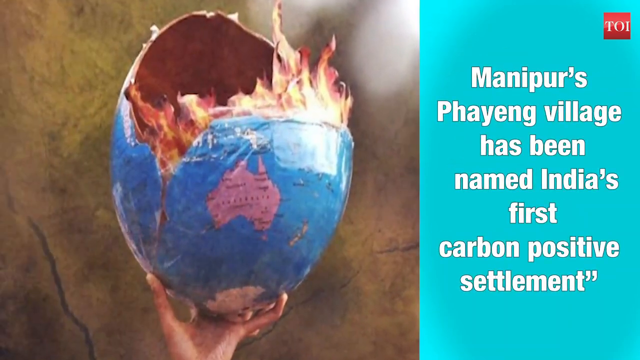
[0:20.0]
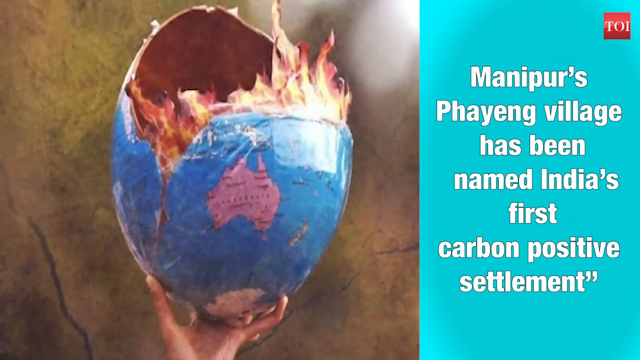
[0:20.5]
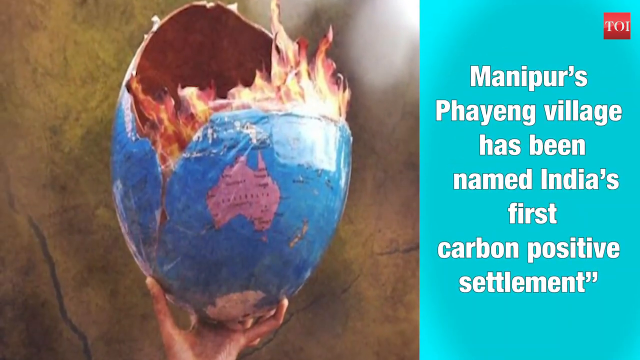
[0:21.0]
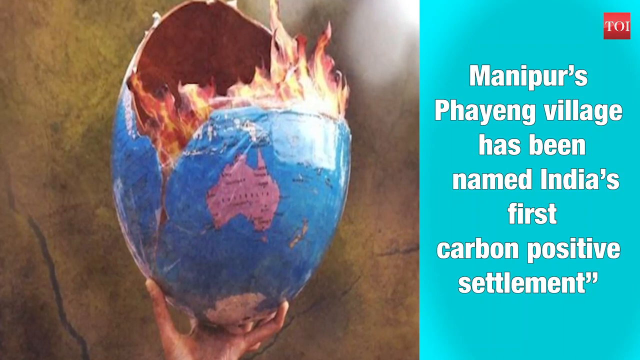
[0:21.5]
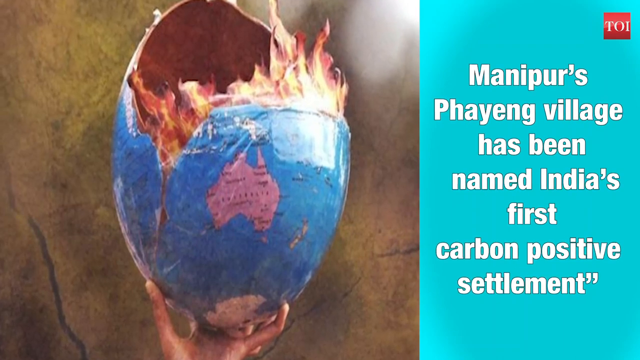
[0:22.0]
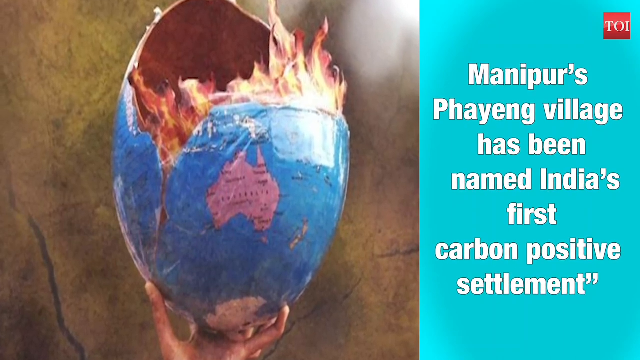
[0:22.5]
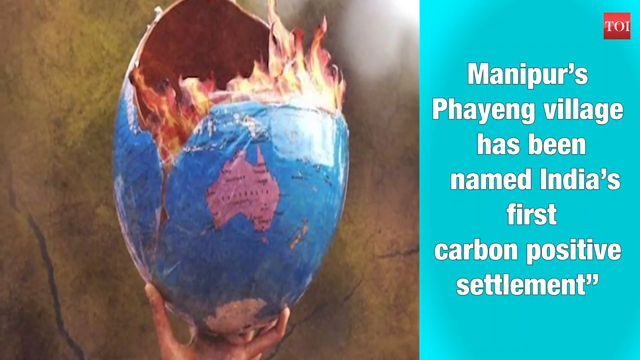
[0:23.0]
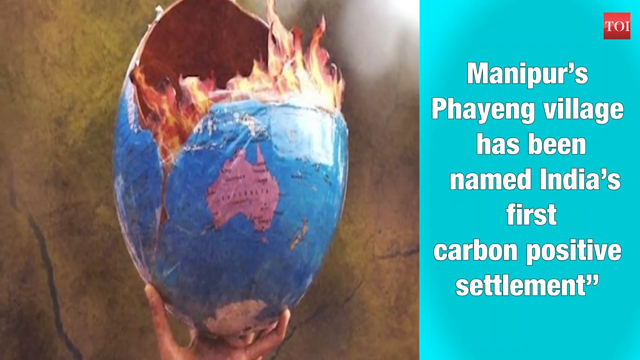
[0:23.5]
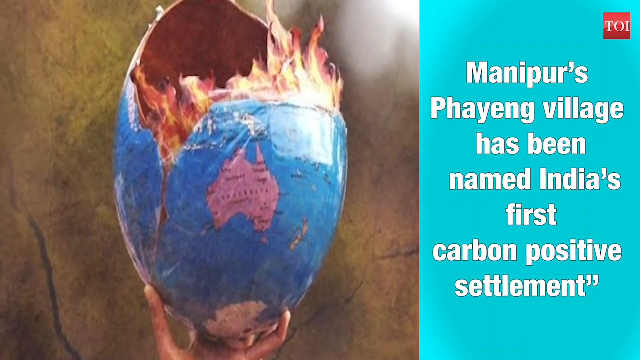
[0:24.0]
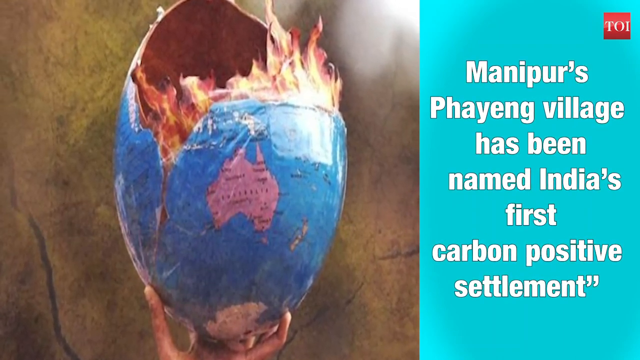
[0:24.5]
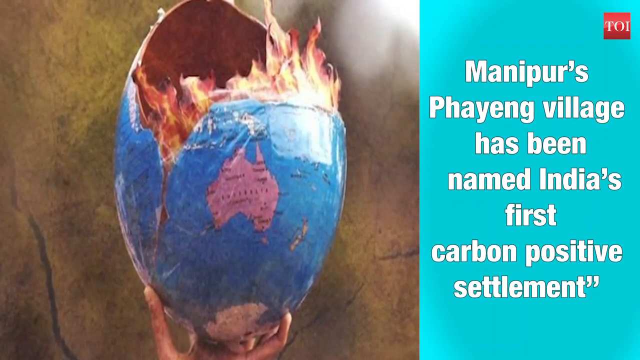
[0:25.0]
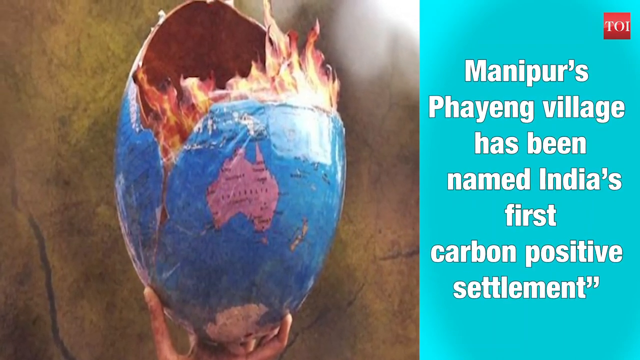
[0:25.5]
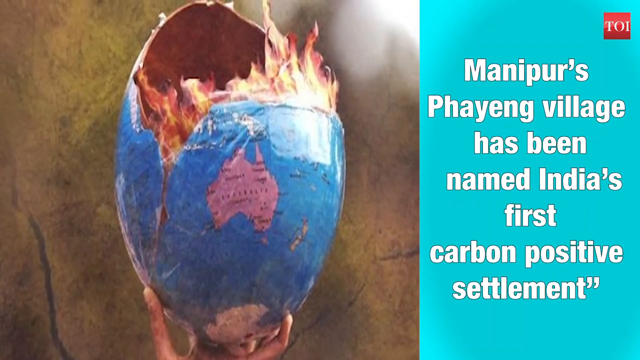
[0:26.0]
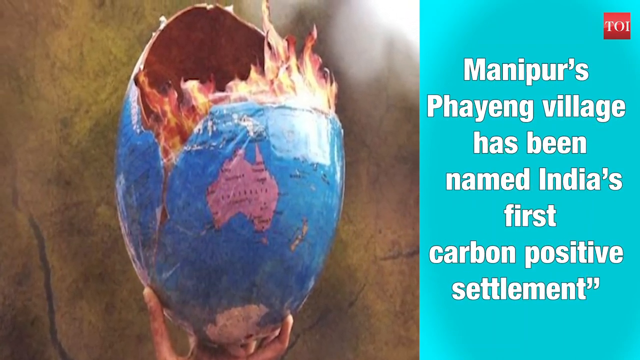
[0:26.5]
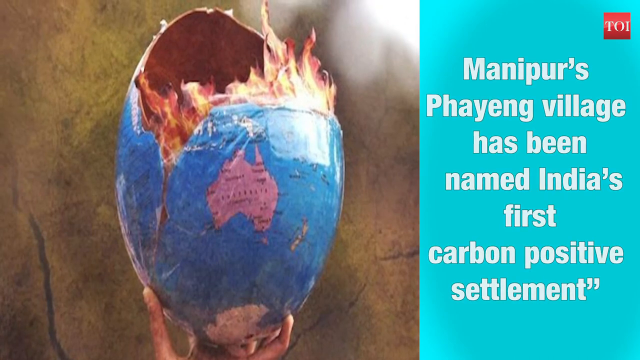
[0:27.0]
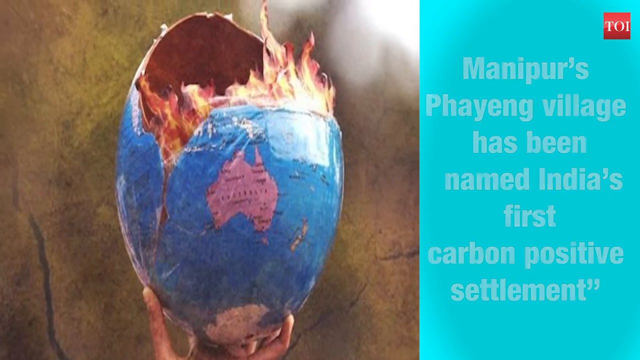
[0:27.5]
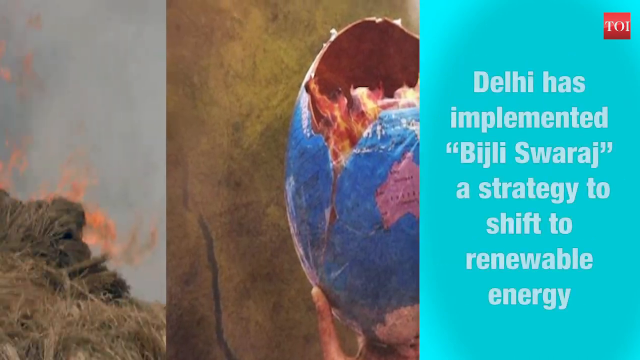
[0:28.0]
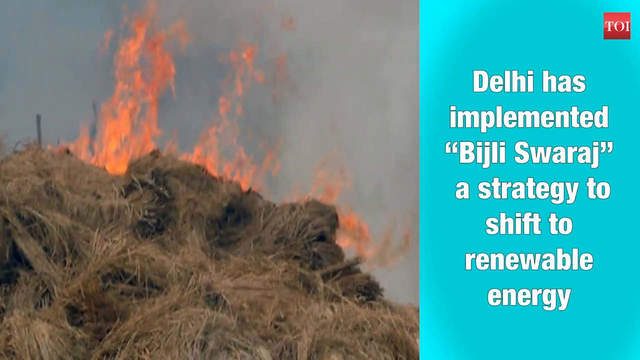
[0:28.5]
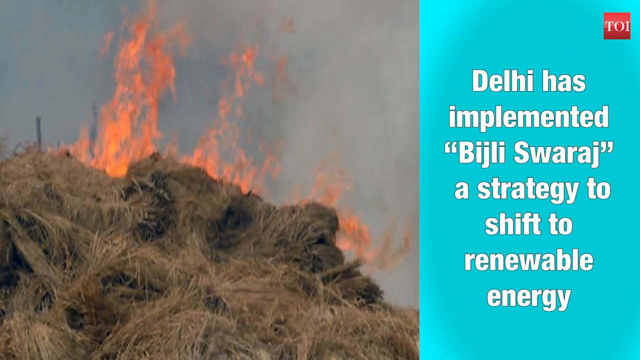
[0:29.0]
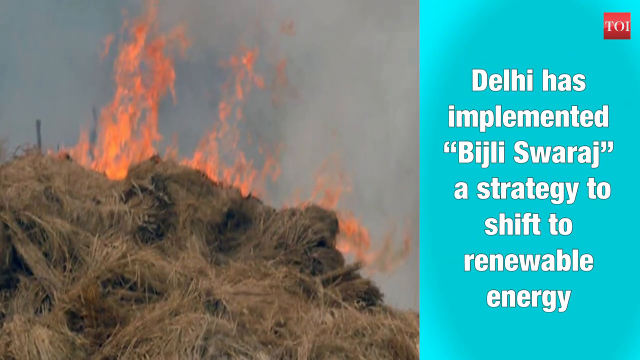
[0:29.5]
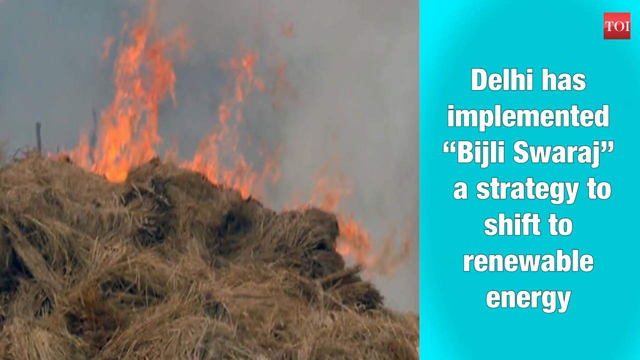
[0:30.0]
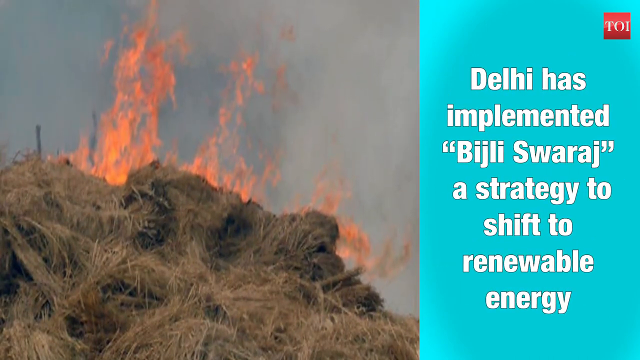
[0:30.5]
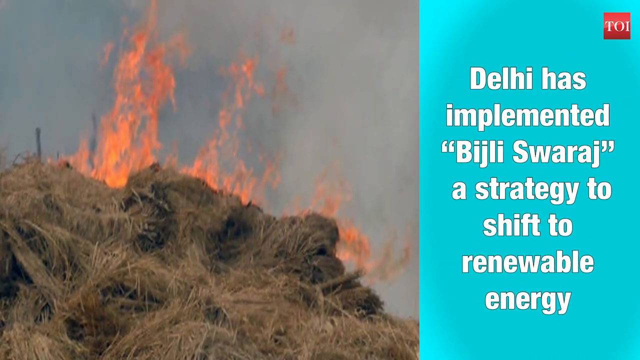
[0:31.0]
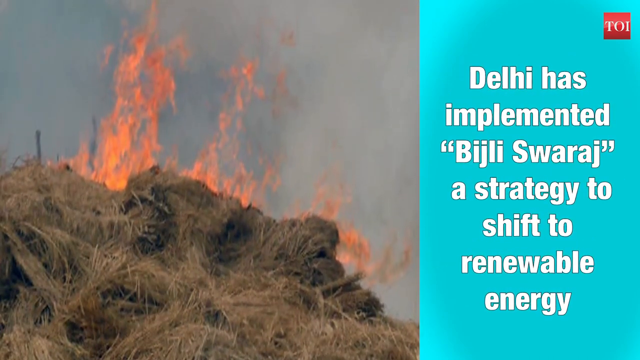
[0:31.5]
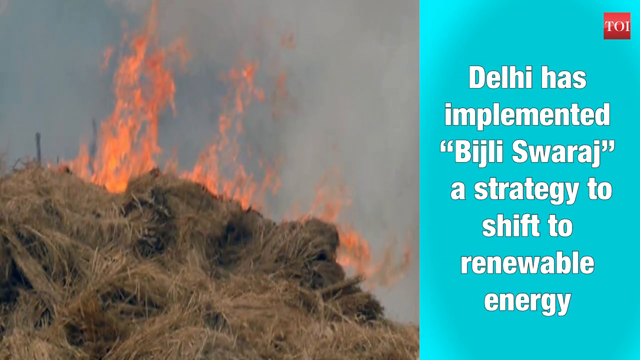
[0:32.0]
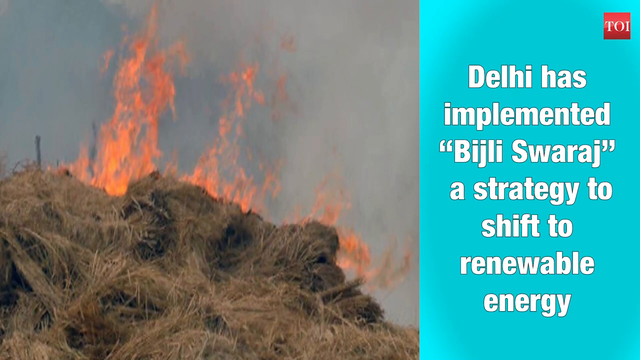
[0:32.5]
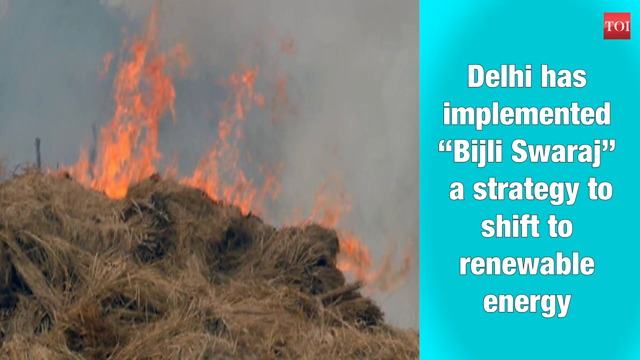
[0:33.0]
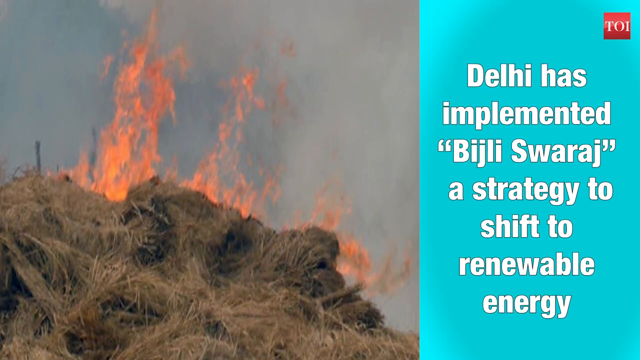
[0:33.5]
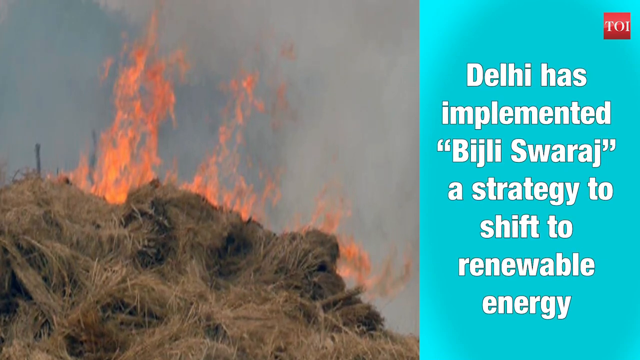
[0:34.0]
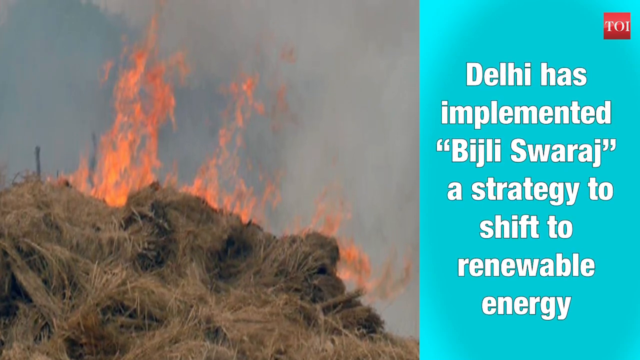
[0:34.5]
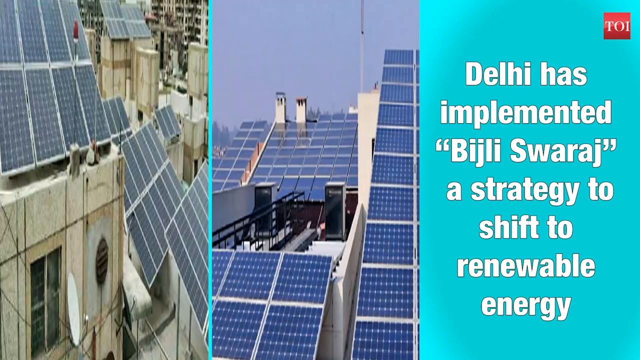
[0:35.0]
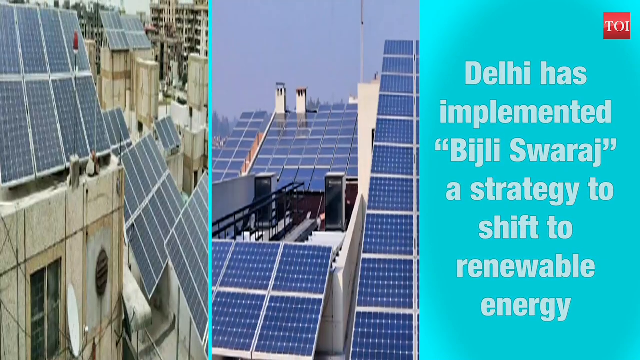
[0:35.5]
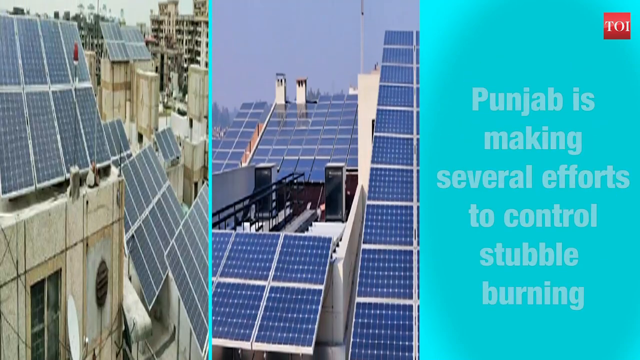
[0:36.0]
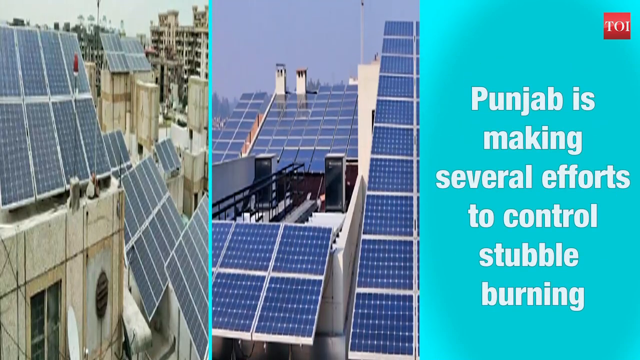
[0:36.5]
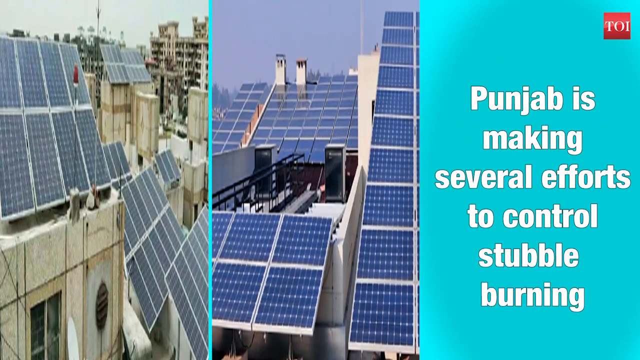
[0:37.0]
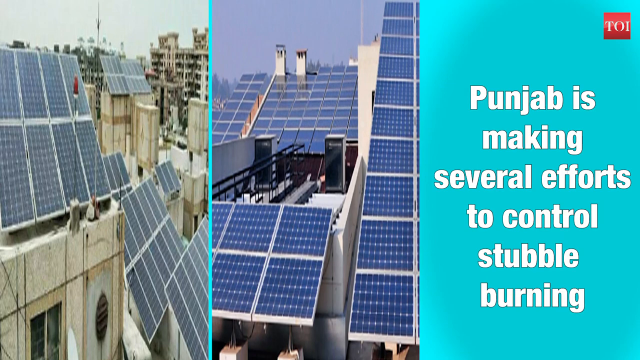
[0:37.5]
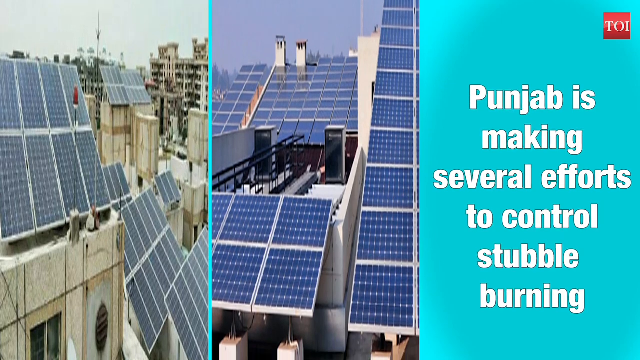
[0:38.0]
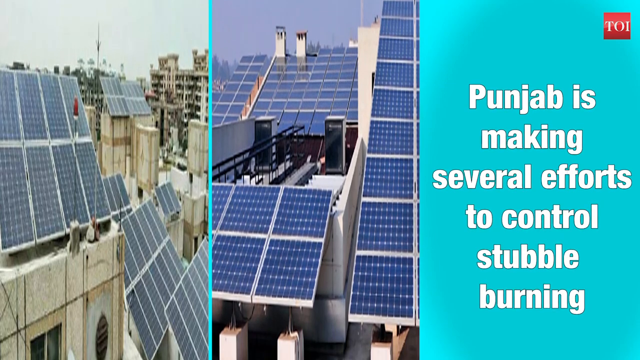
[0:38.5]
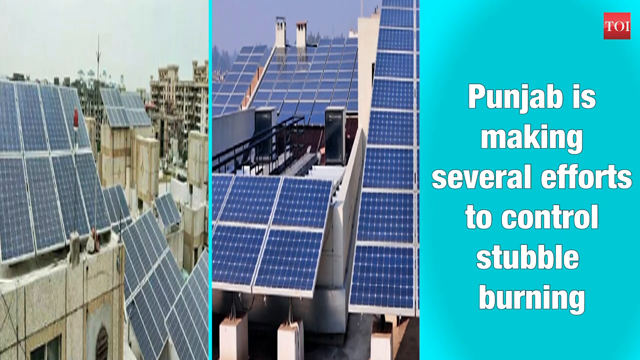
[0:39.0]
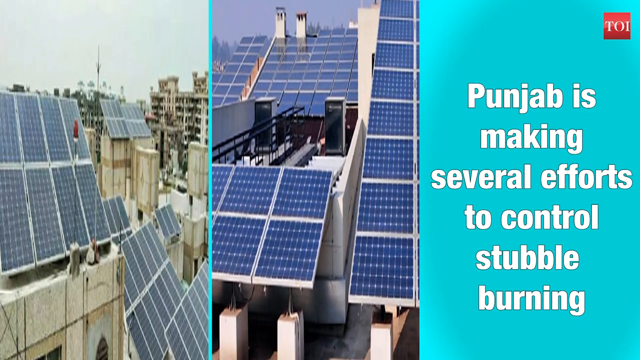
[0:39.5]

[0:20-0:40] On the left-hand side, a papier-mâché earth on a brown background has been opened up, revealing flames all inside it. On the right-hand side, an aqua-colored rectangle reads "Manipur's Faying Village has been named India's first carbon-positive settlement", and a red square in the upper right-hand corner says "TOI" in white. The shot zooms in on the earth and then kind of zooms away from it, and the image switches to a section of brush outdoors that is on fire, with a lot of smoke around. The aqua box now says "Delhi has implemented Beechli Swaraj, a strategy to shift to renewable energy". The image kind of rotates up, and two images appear side by side, separated by an aqua line, seemingly showing a number of solar panels in slums.